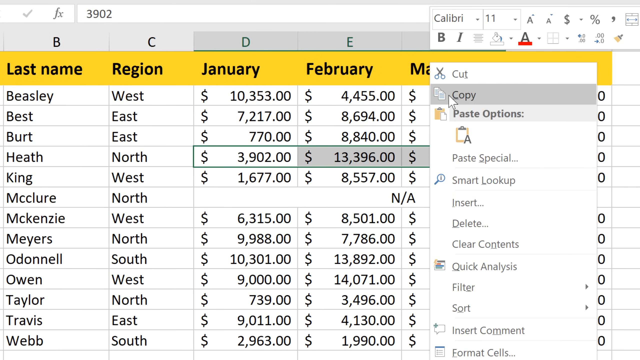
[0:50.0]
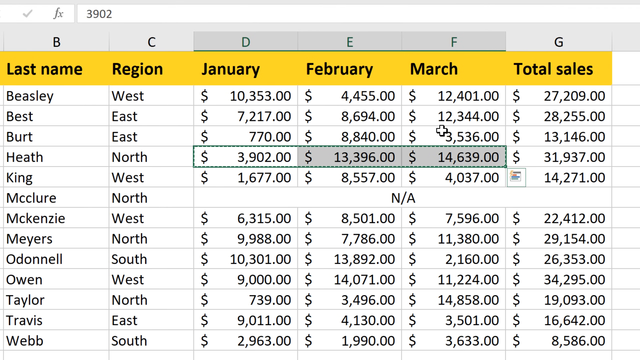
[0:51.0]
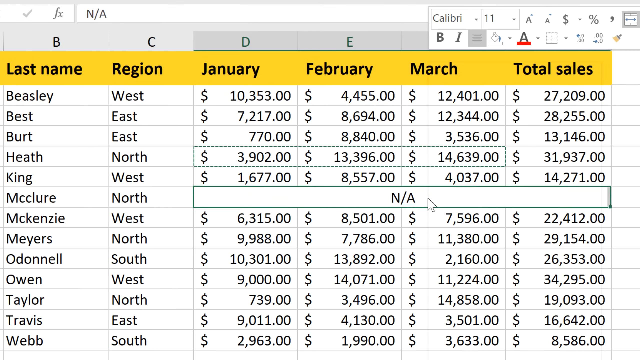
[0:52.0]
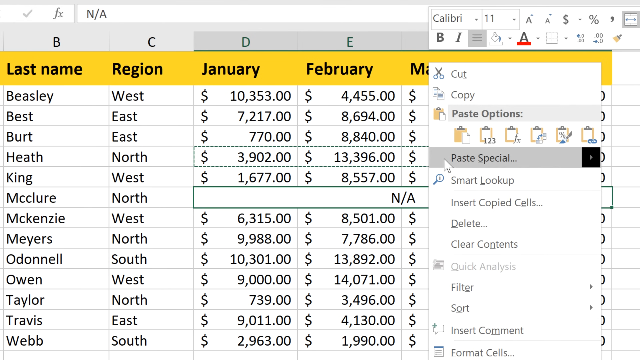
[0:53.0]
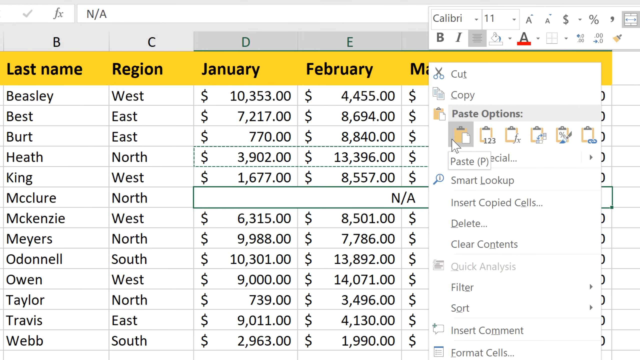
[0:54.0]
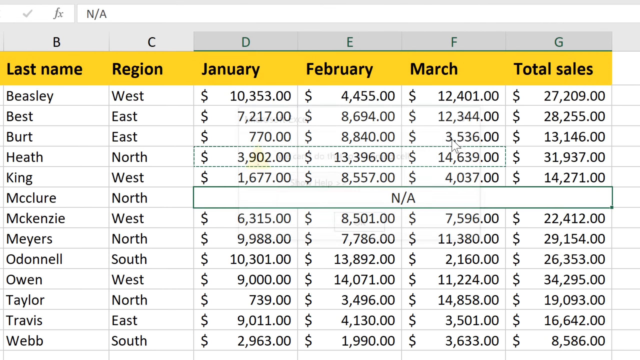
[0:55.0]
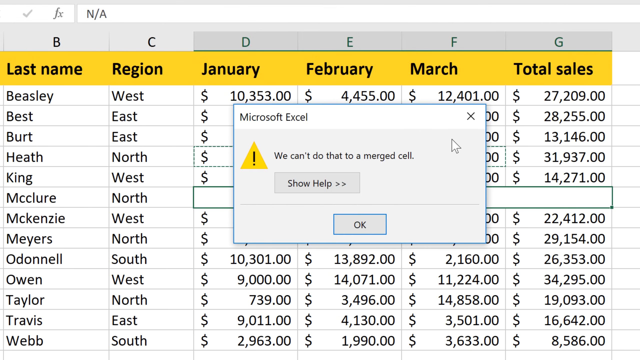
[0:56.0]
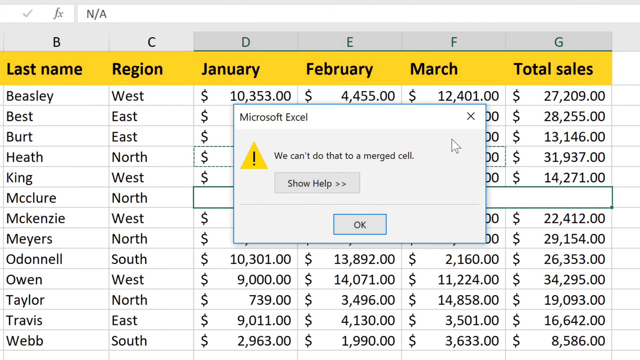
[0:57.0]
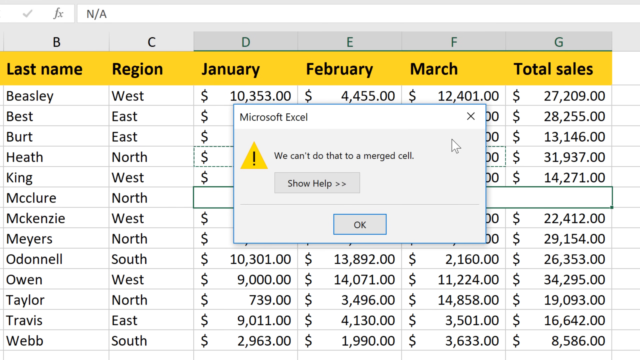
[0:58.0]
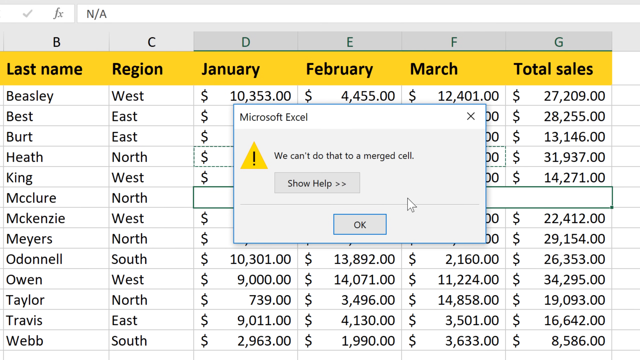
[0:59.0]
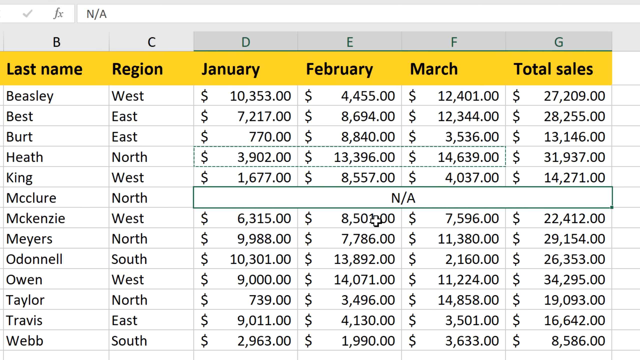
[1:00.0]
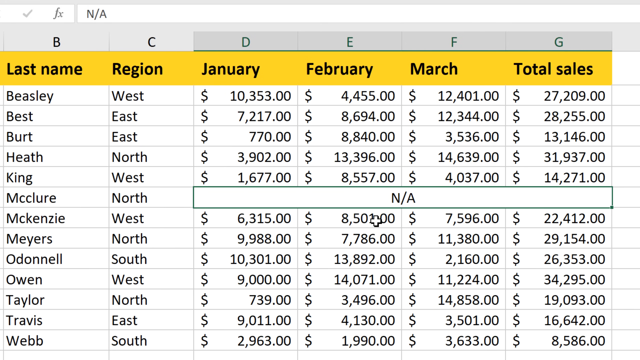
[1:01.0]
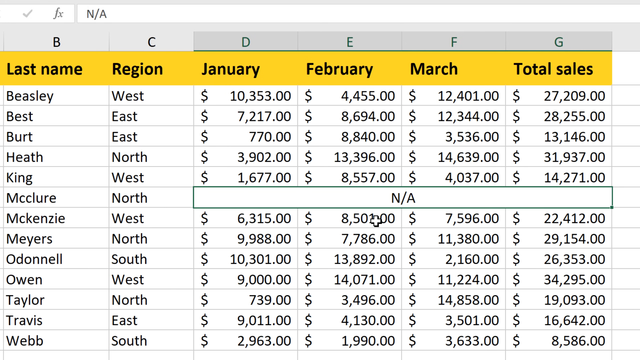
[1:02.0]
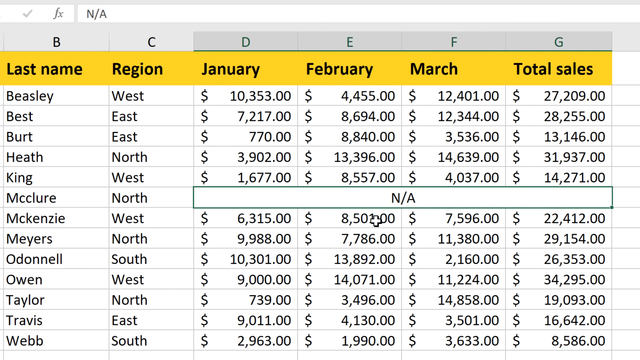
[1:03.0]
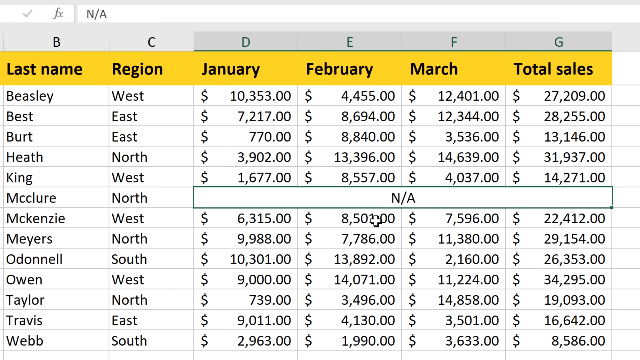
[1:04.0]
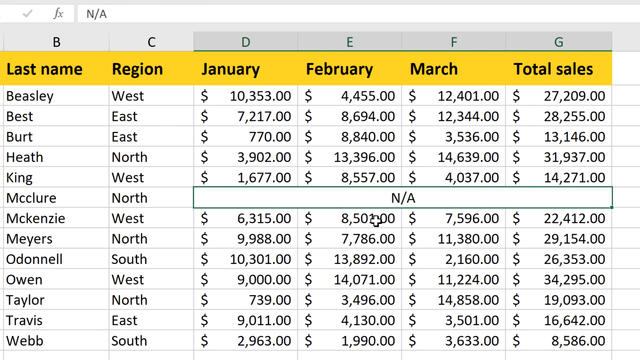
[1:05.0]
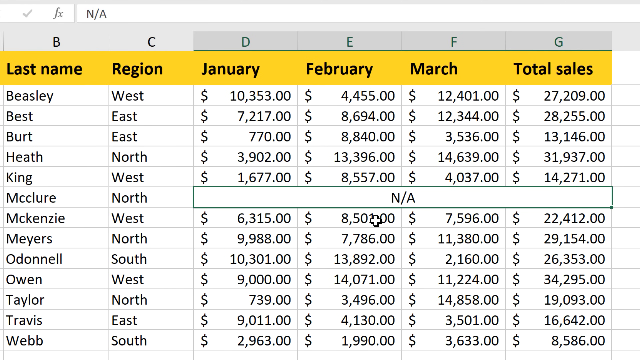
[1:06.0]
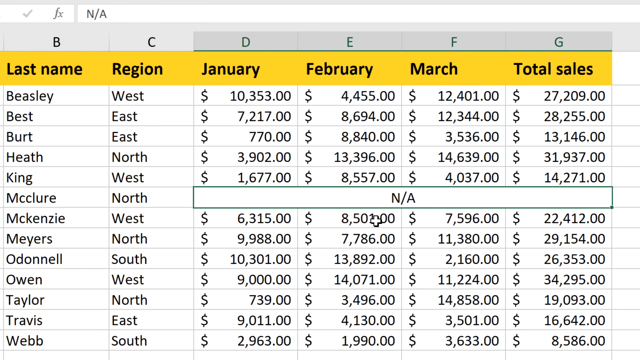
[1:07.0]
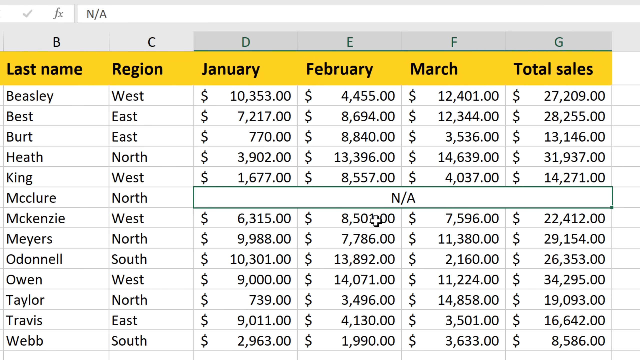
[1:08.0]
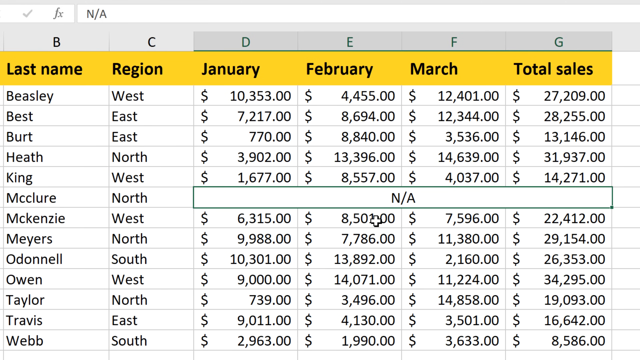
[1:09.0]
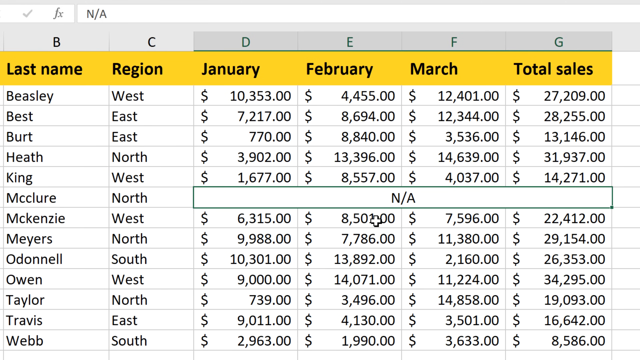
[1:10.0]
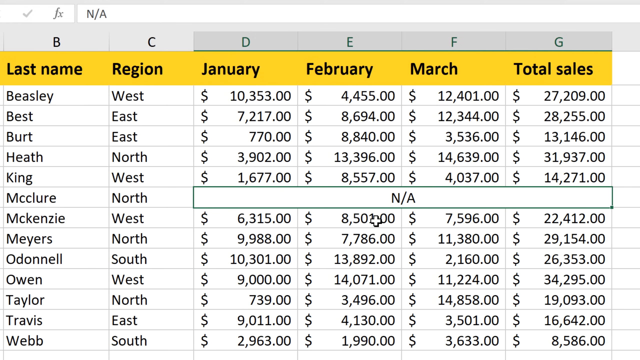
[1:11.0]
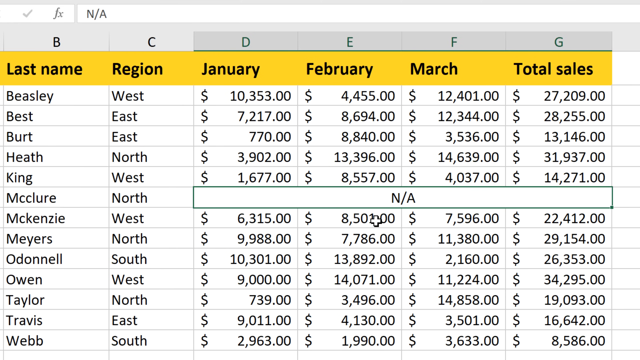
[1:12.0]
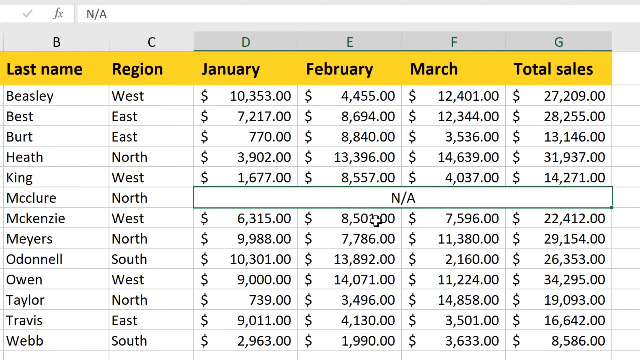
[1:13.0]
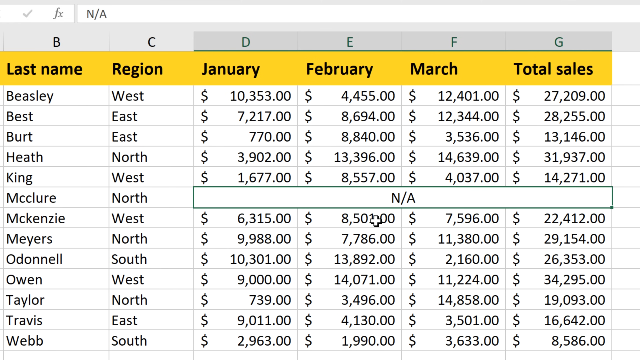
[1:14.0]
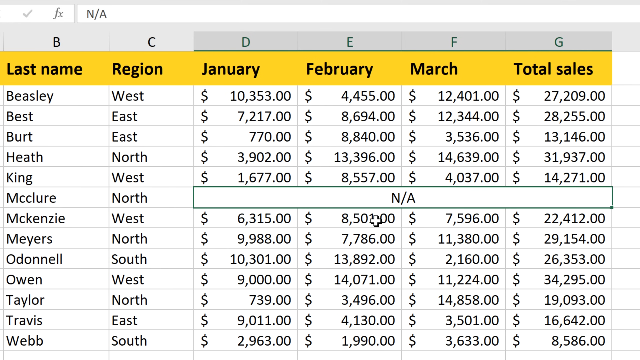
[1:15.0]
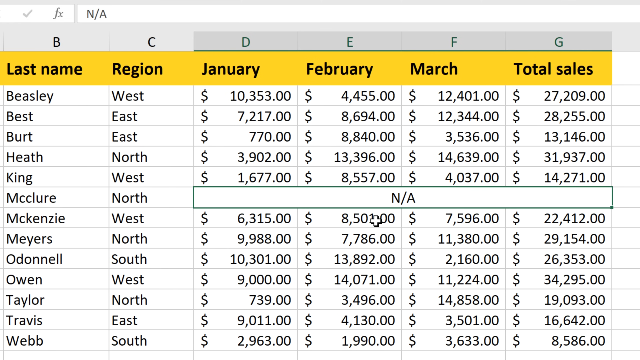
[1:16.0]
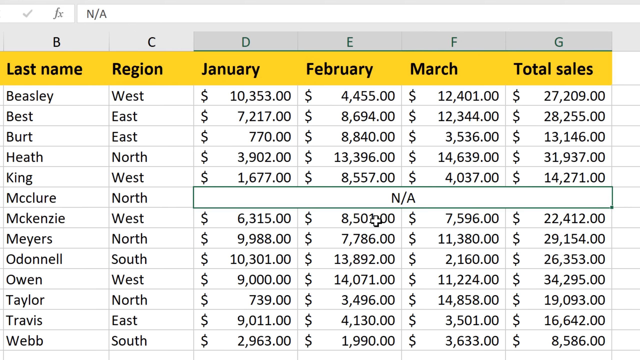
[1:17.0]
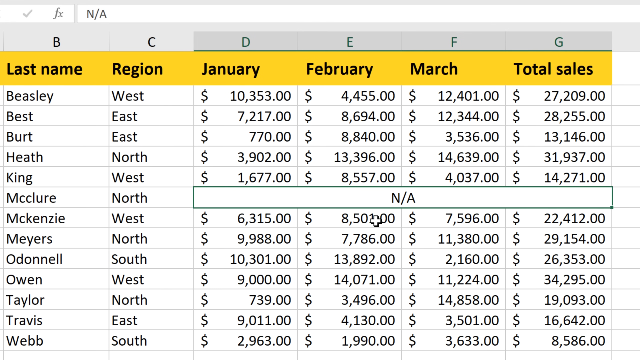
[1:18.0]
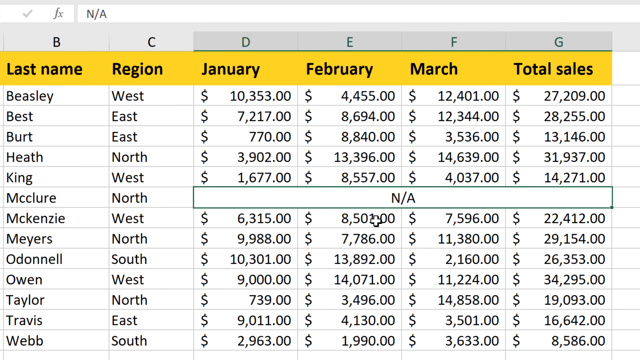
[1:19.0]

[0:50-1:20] The cursor has just highlighted columns next to the last name Heath: the E and F columns, February and March's money data, are highlighted in gray, and so is January. A dotted moving line runs along all three columns. The user right-clicks and a tab of options pops up, covering the right-hand side of the data chart. The user clicks on paste options and appears to click the first option, "paste." A Microsoft Excel tab pops up saying "we can't do that to a merged cell," with a "show help" button and an "OK" button below. The user moves the cursor down and clicks "OK," and the dotted lines highlighting the three columns disappear.